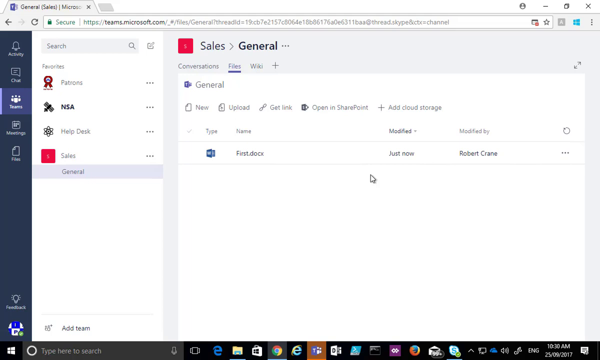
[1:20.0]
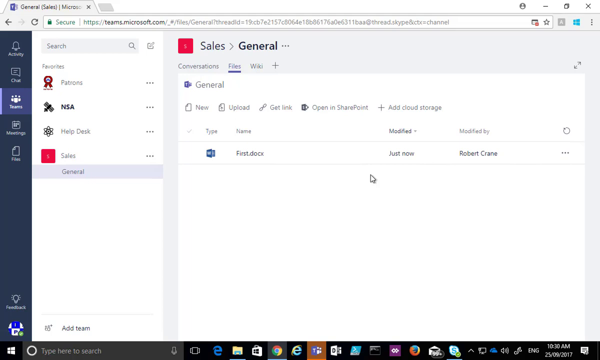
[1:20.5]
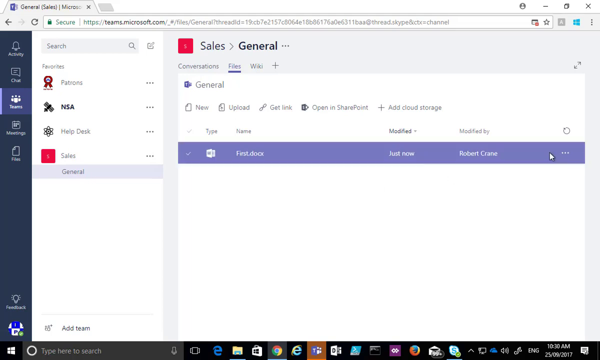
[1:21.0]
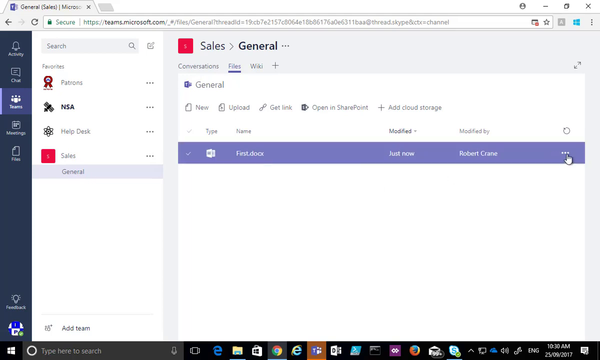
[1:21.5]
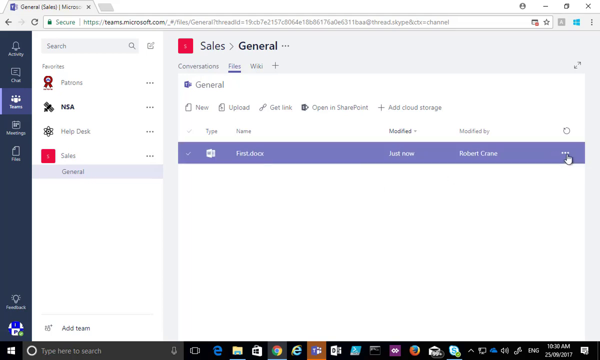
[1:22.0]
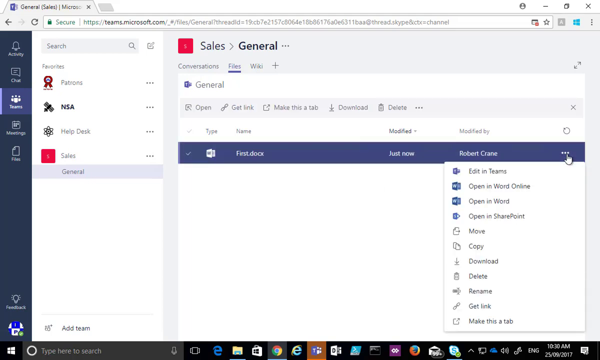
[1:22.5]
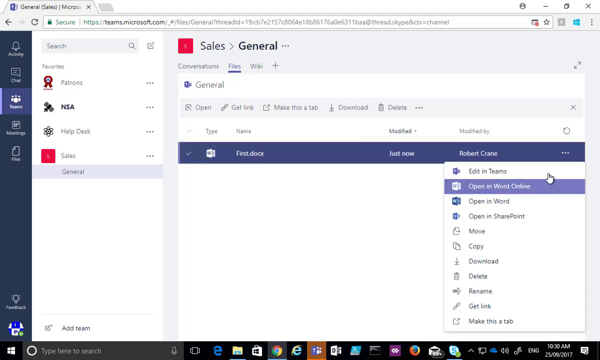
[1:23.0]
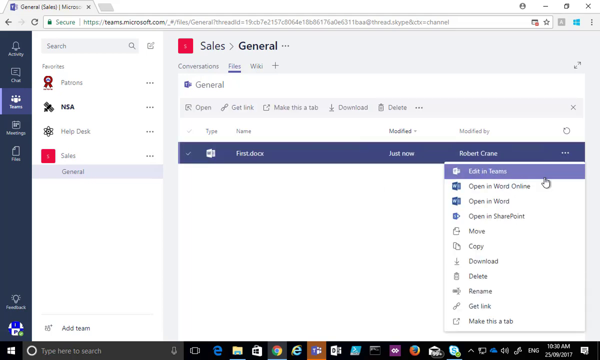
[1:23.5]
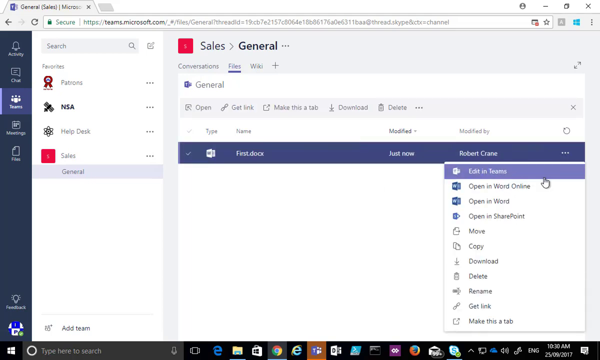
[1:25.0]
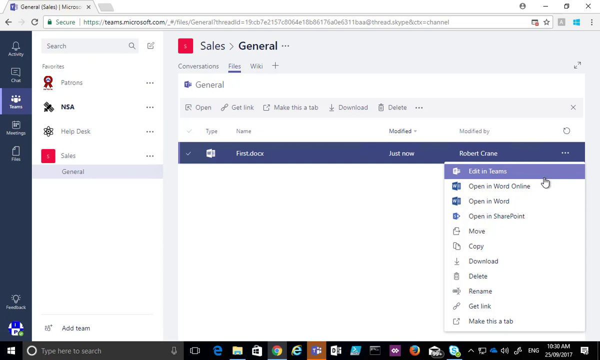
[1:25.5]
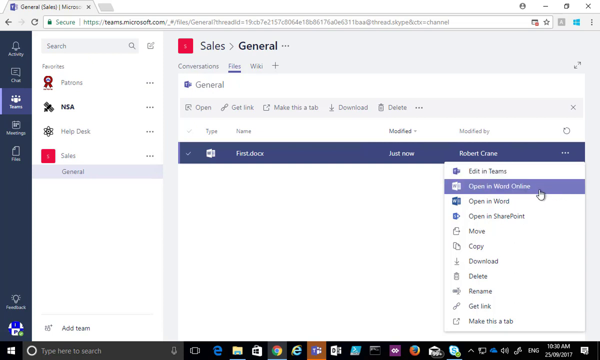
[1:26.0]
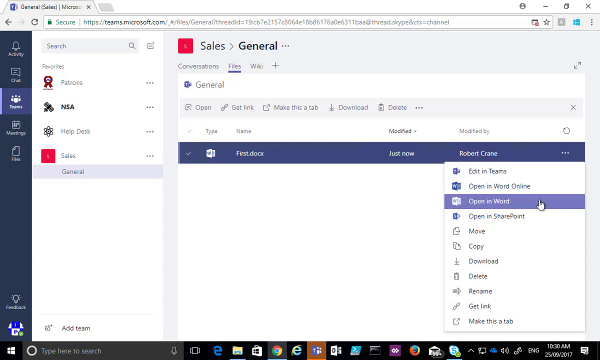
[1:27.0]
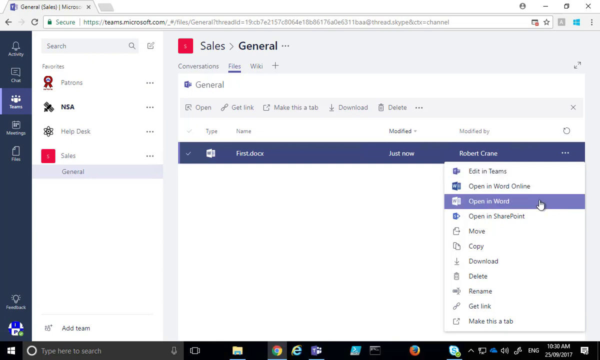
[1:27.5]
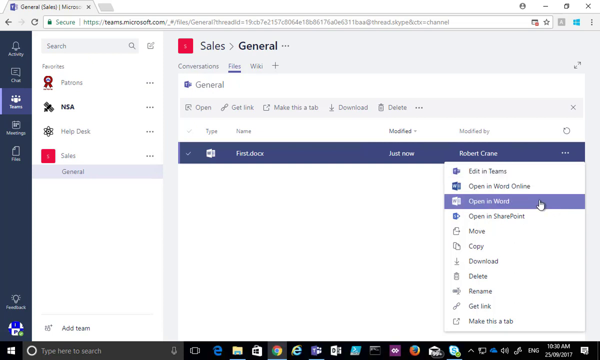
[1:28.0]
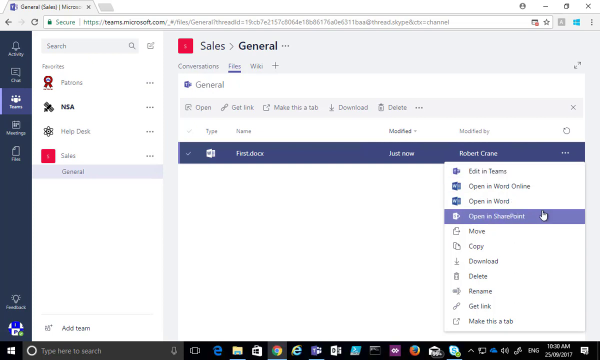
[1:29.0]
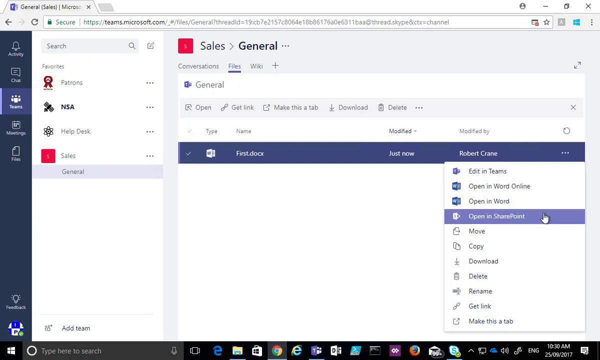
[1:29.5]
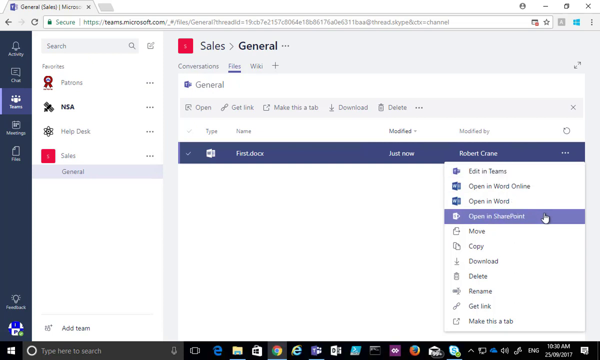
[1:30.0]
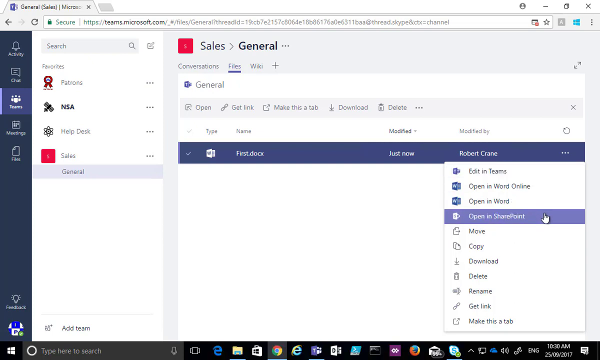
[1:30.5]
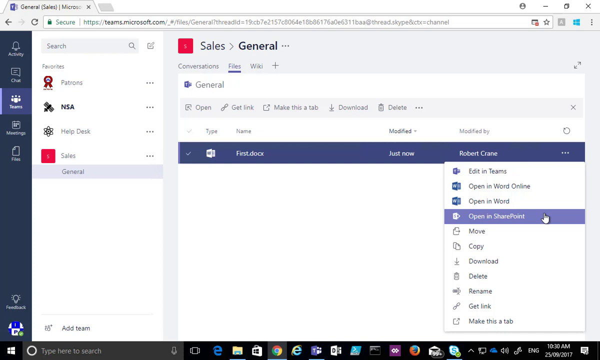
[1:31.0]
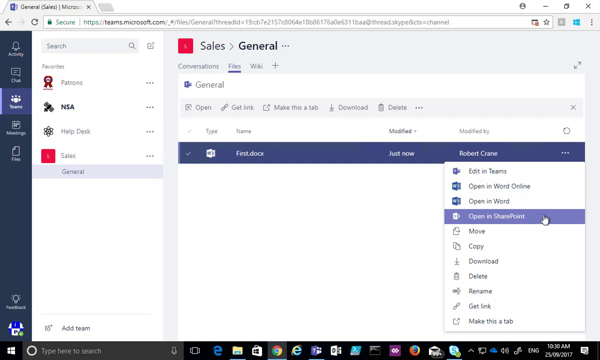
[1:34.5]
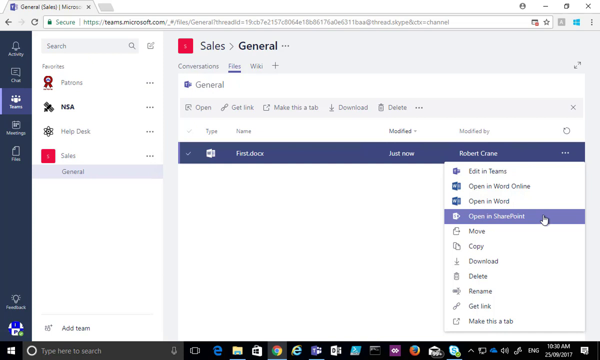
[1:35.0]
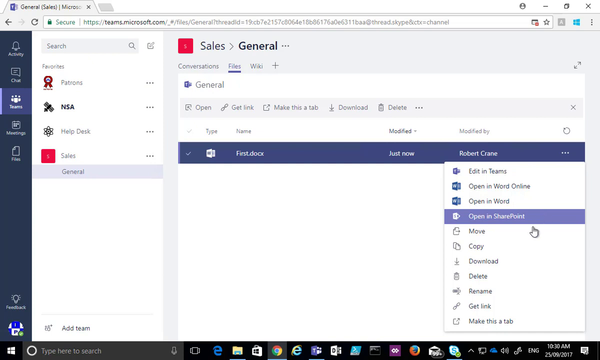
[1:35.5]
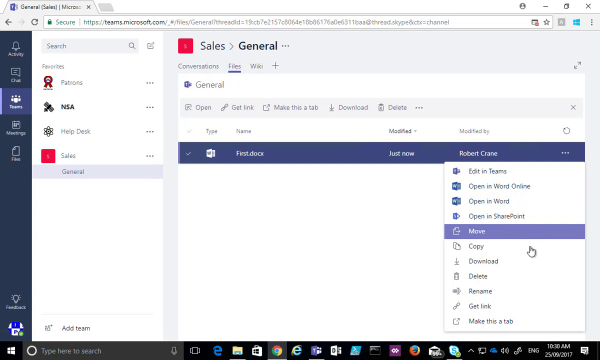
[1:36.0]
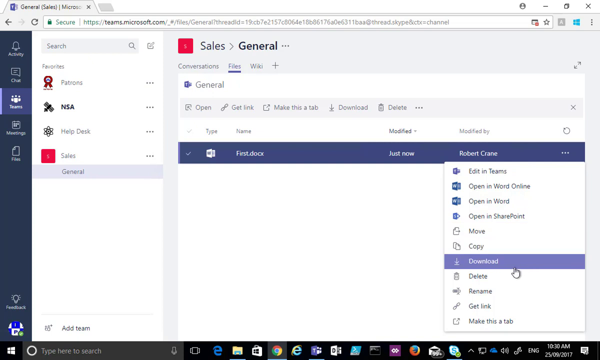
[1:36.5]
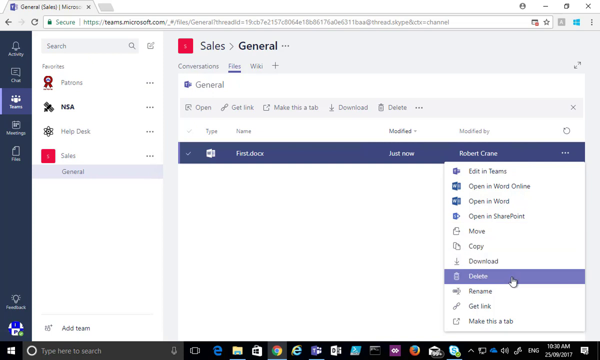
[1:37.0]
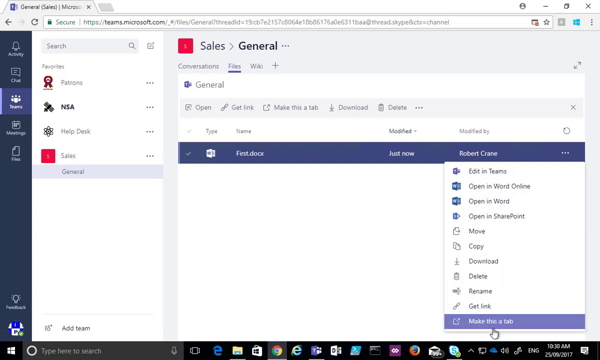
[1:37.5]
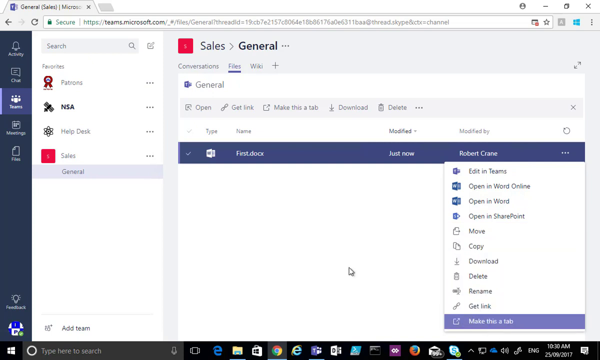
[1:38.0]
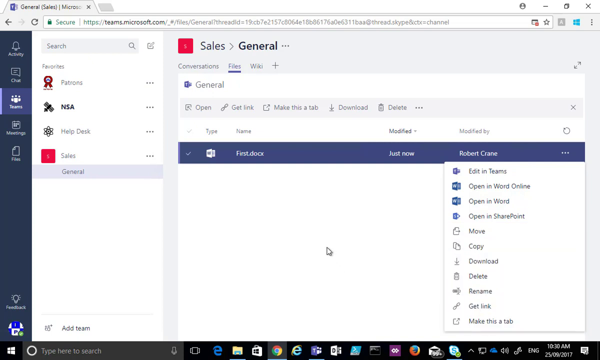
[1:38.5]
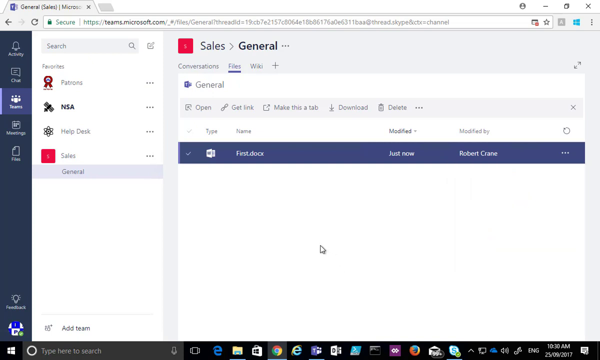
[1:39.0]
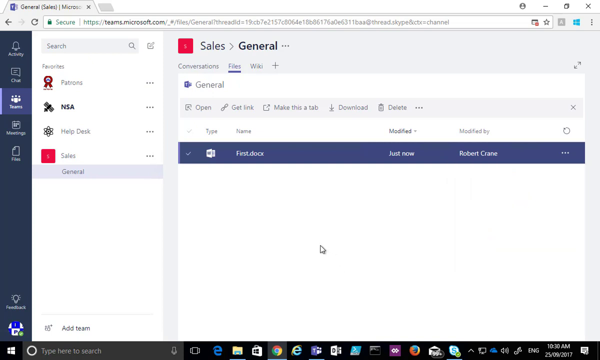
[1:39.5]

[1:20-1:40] The page listing the General files that have been uploaded is shown. The list has columns for type, name, modified (how long ago the file was last modified) and modified by, plus a column with a closed circle containing an arrow. The first file is a Word document named "first.docx," last modified "just now" by Robert Crane. Three ellipses under the closed circle are selected, and a menu pops up with "Edit in Teams," "Open in Word Online," "Open in Word," "Open in SharePoint," "Move," "Copy," "Download," "Delete," "Rename," "Get link" and "Make this a tab." None of the options is selected; they are simply shown.